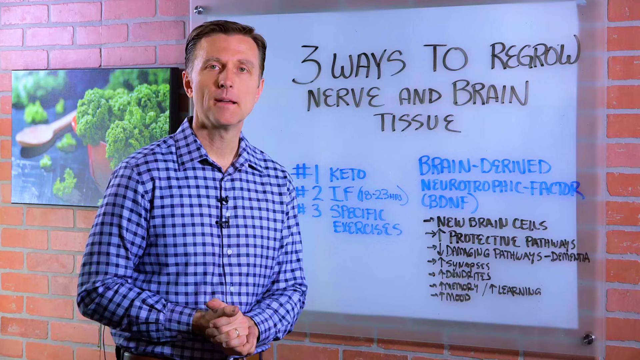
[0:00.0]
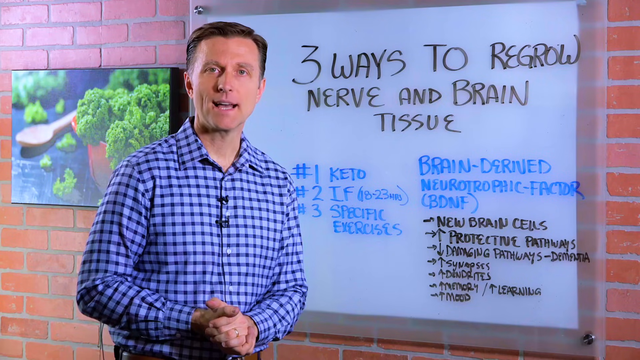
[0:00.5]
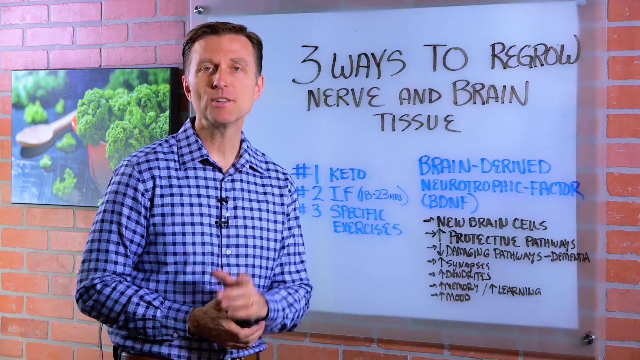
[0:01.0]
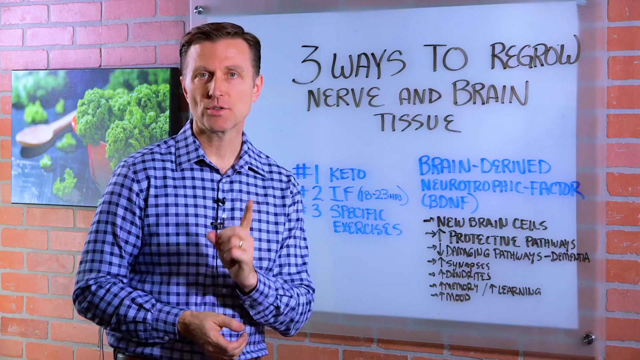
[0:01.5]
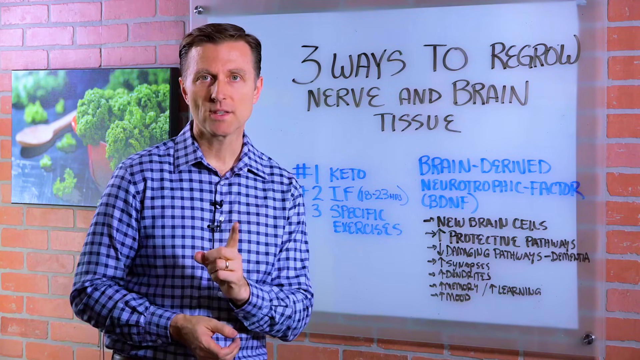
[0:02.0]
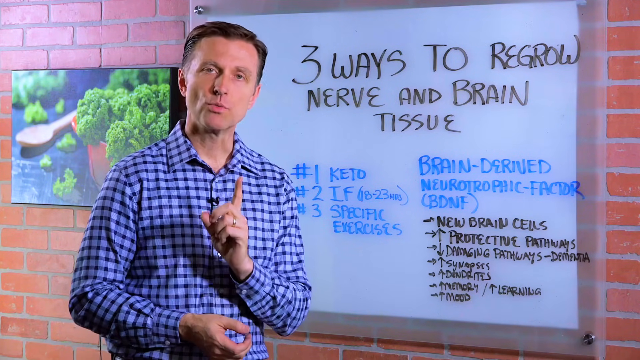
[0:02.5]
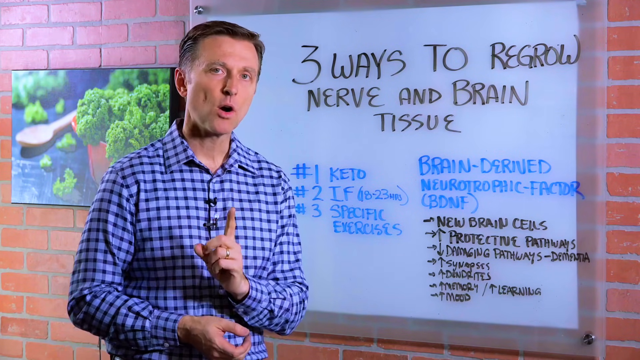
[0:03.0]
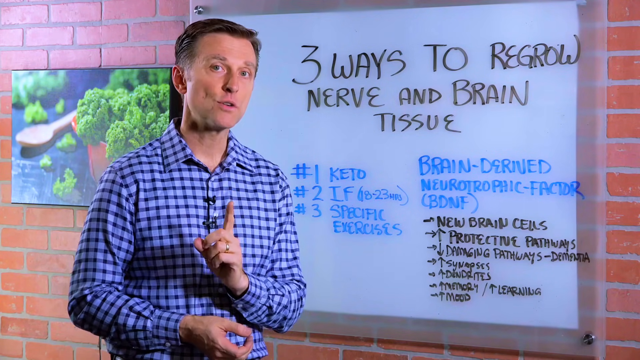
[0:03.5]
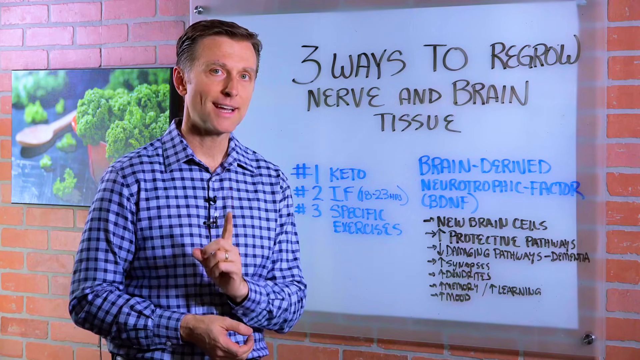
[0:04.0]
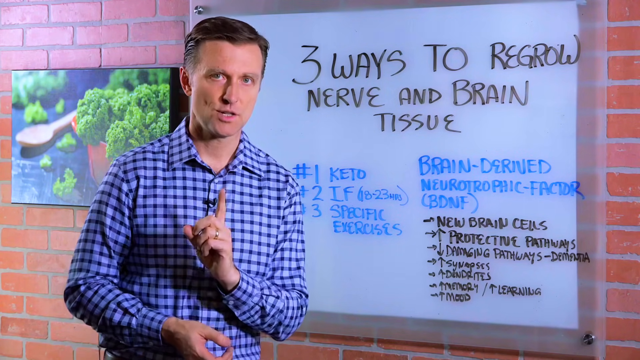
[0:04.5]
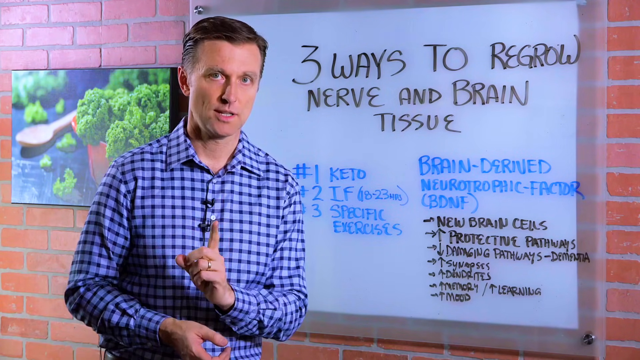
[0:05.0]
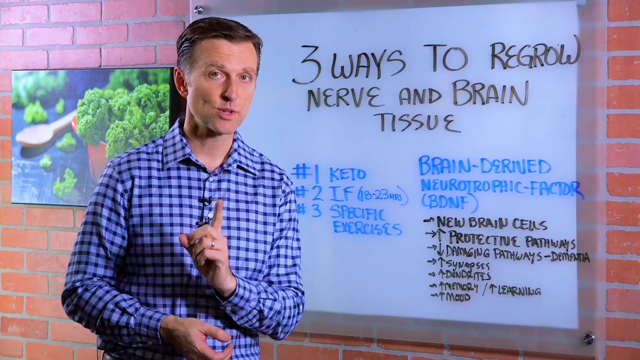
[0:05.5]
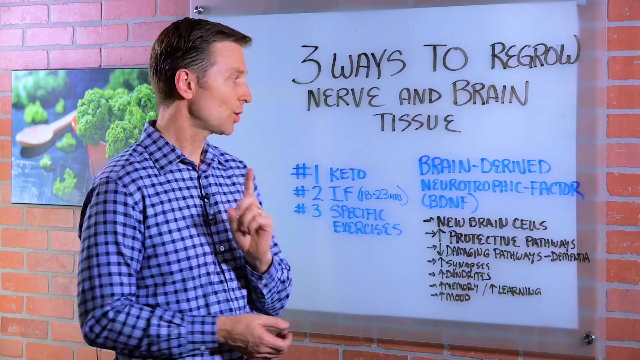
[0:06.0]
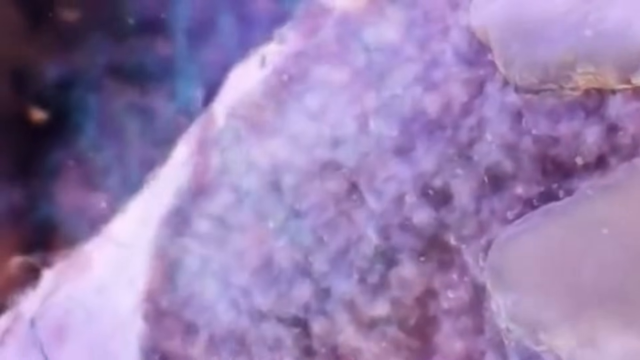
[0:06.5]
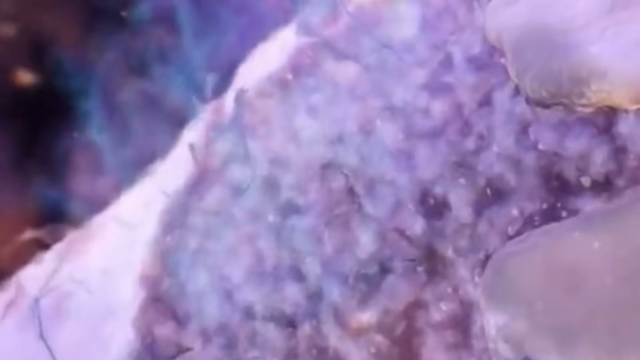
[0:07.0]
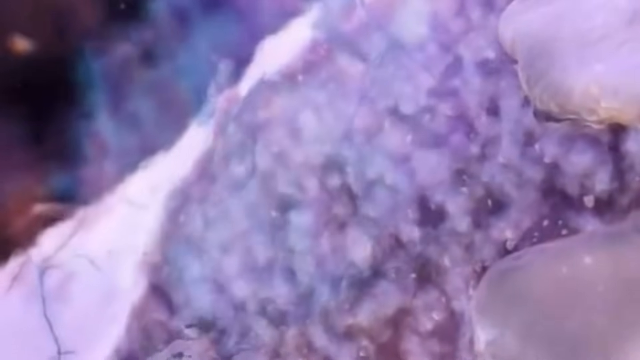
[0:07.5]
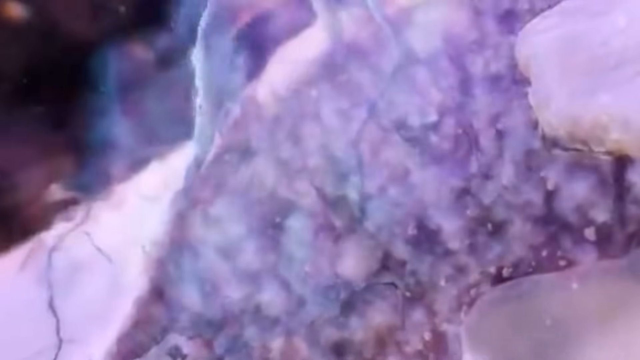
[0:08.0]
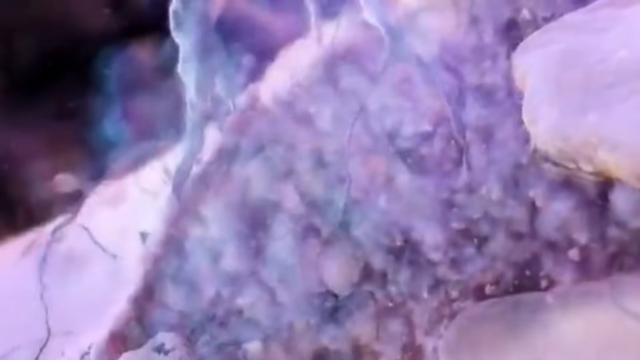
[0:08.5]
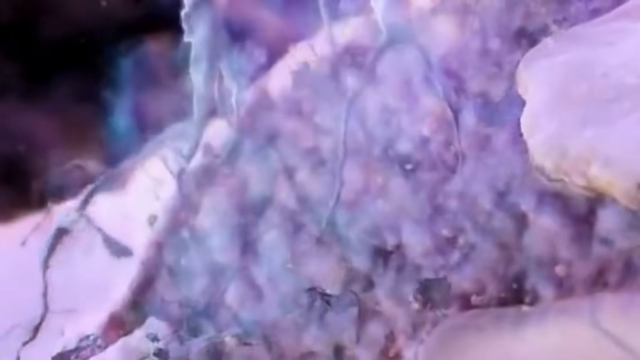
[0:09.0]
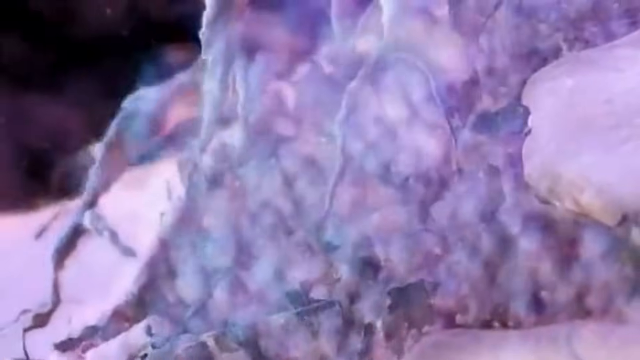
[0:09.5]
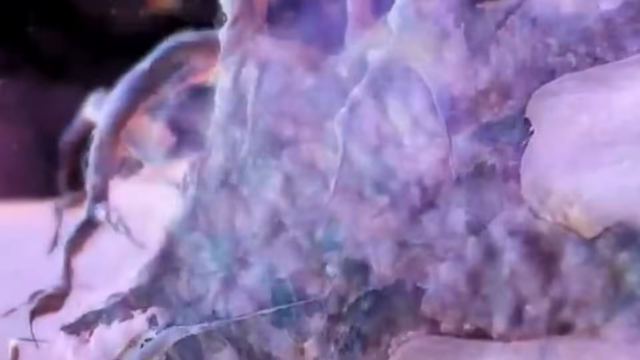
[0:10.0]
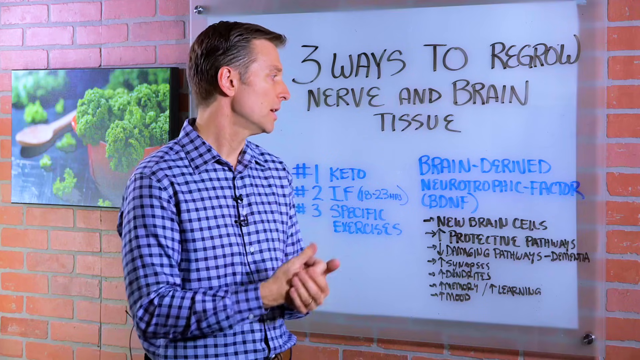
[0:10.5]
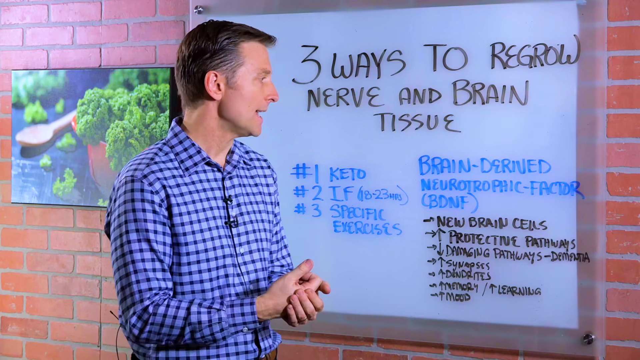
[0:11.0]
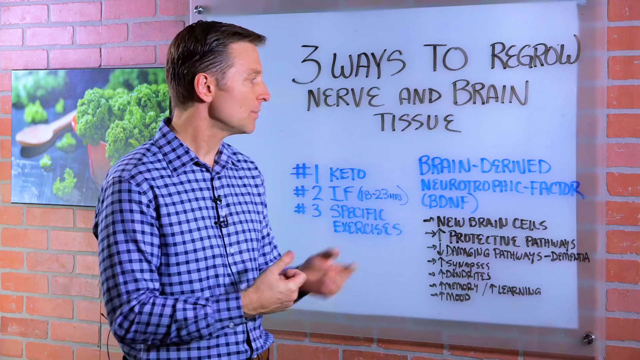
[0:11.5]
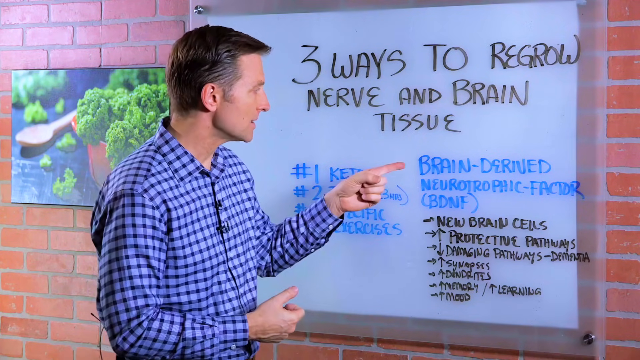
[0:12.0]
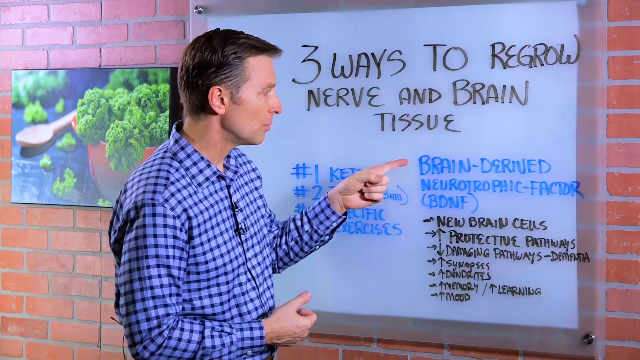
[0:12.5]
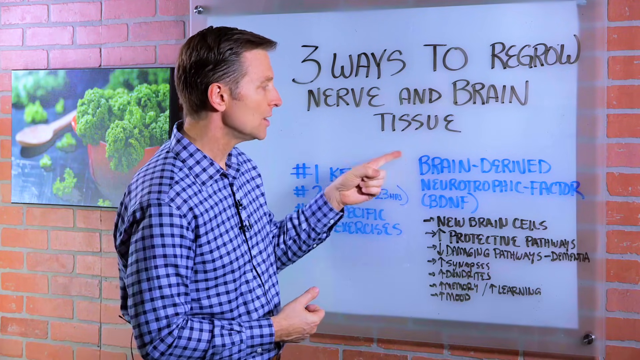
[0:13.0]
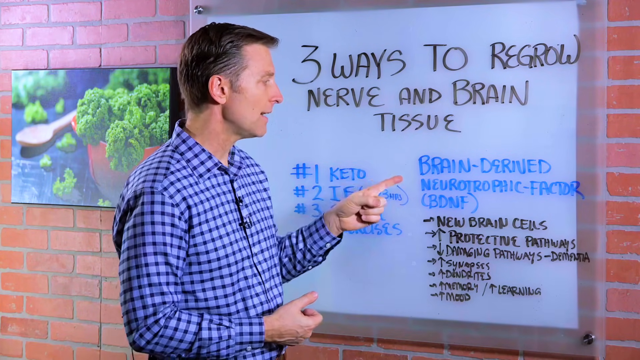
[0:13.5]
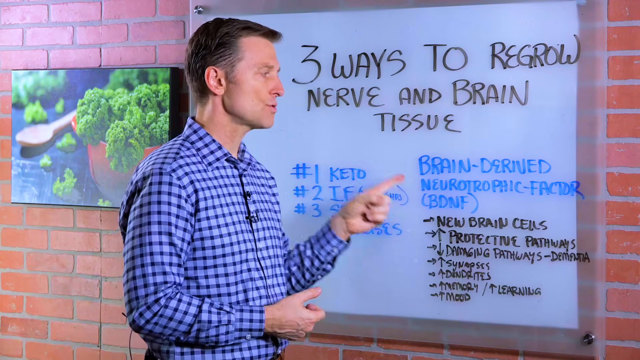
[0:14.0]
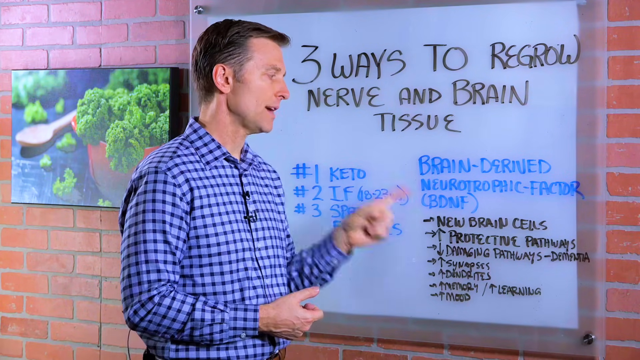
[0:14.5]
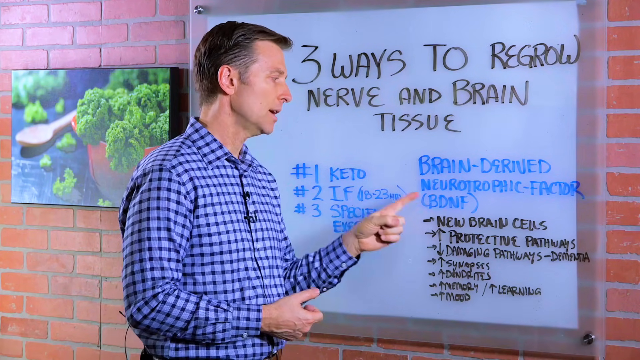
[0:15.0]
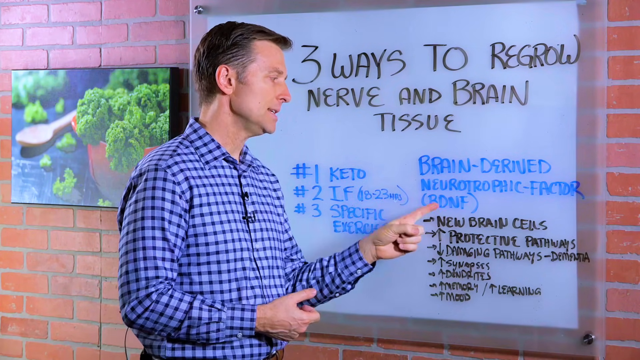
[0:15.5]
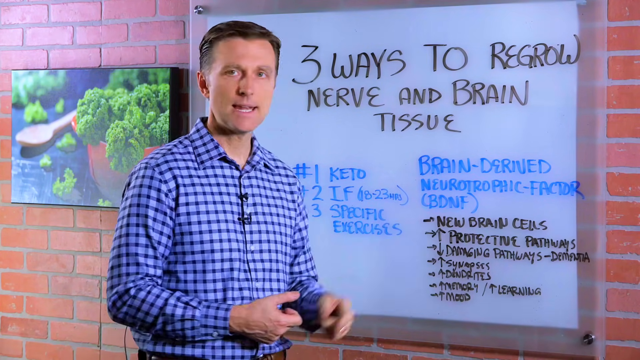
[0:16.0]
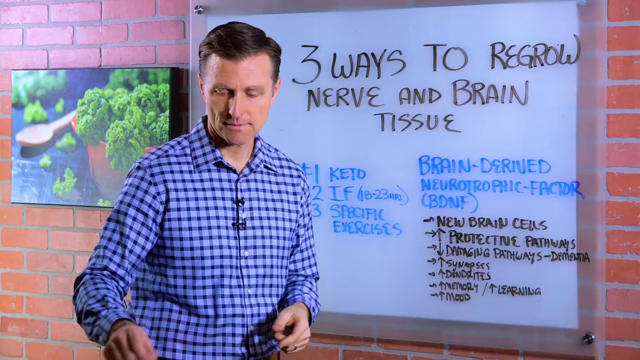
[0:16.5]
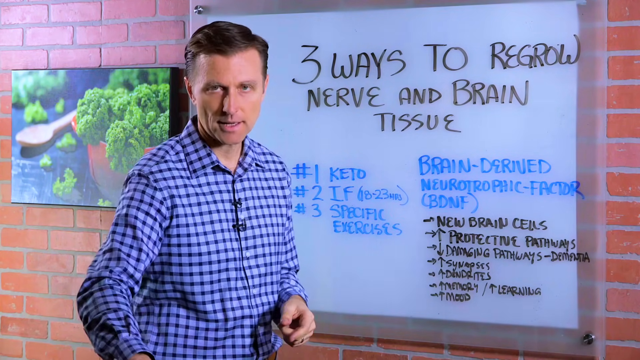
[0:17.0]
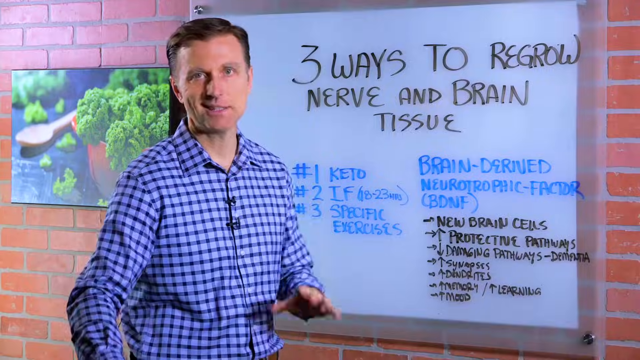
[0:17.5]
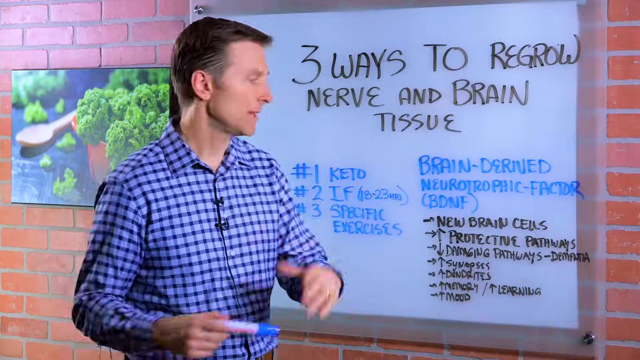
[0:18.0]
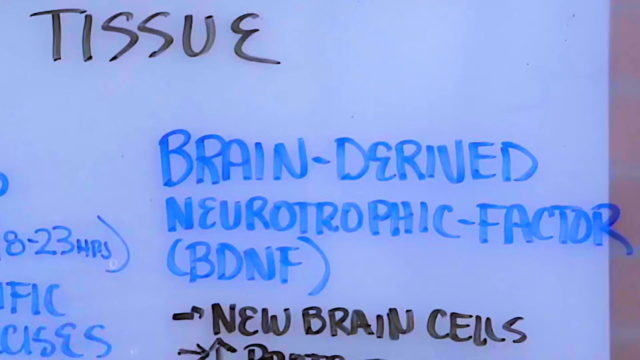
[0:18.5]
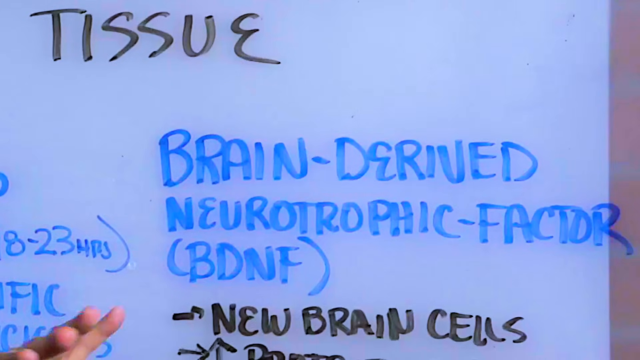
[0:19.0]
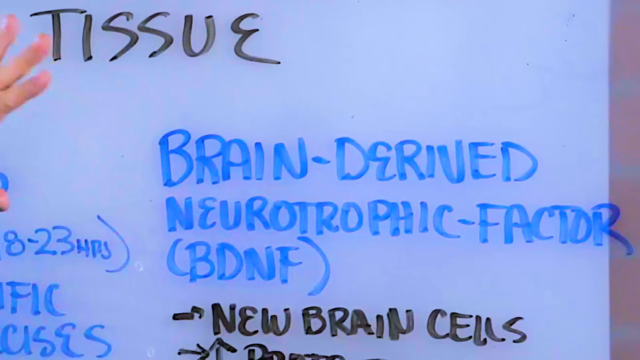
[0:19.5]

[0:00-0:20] A clean-shaven man seems to be talking to the camera. Behind him the words "3 ways to regrow nerves" appear, and then pictures or an image of nerves is shown. The video returns to him looking at what appears to be a whiteboard with everything written down on it. The board reads "3 ways to regrow nerve" and "nerve and brain tissue," followed by numbers and many words, including "brain derived"; one of the items is keto. He seems to look at the board and then back at the camera. He wears a checkered or plaid button-down shirt of a kind of purple color, and he keeps pointing at the board.